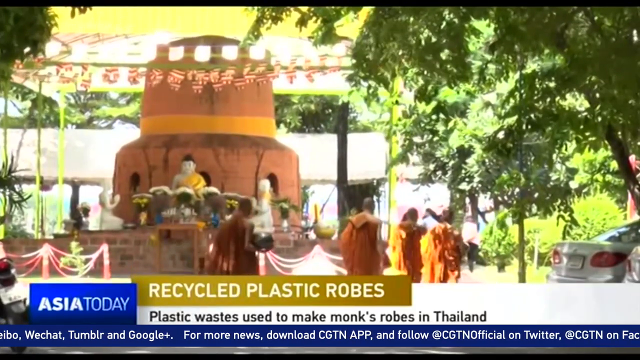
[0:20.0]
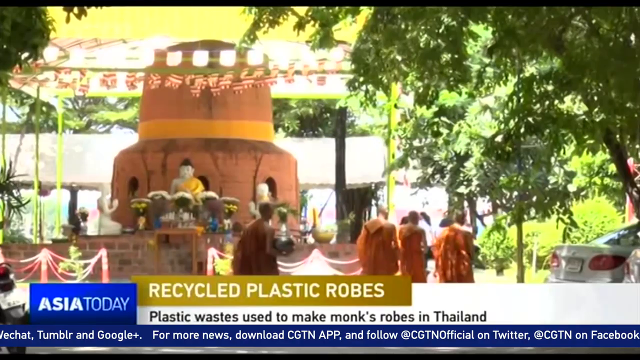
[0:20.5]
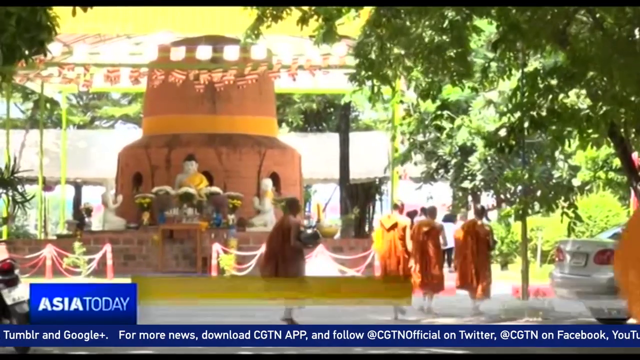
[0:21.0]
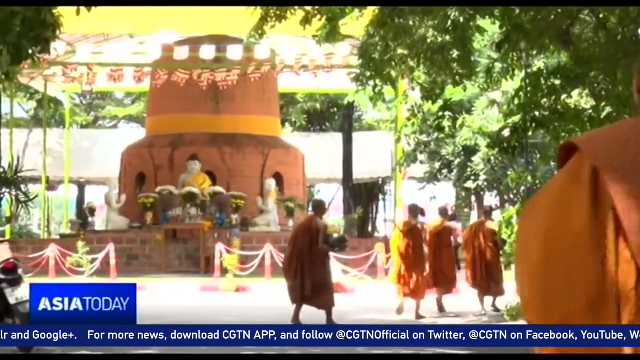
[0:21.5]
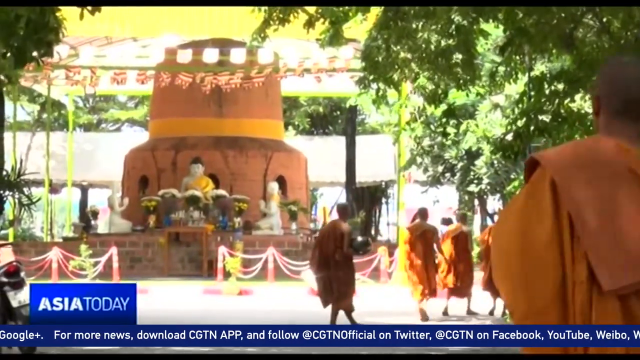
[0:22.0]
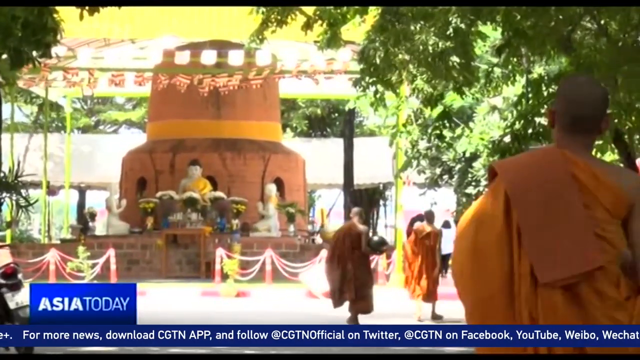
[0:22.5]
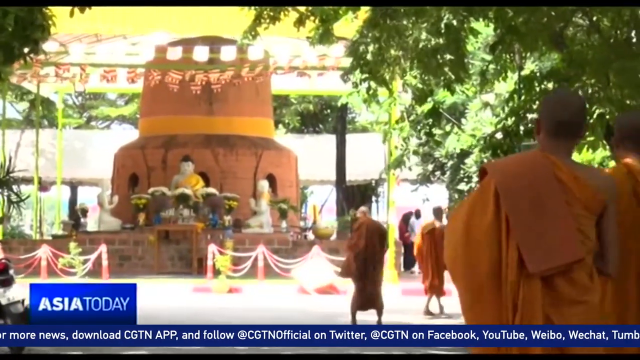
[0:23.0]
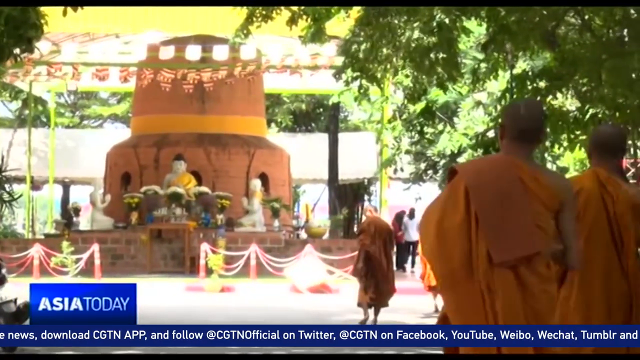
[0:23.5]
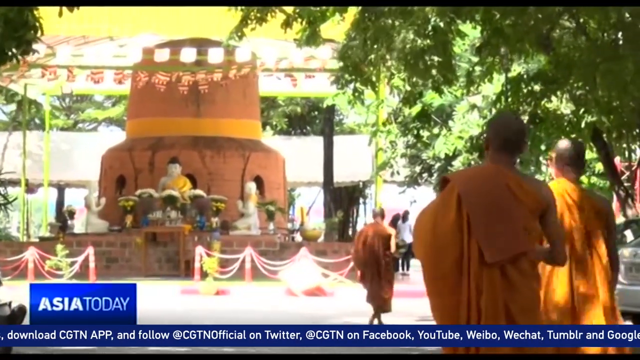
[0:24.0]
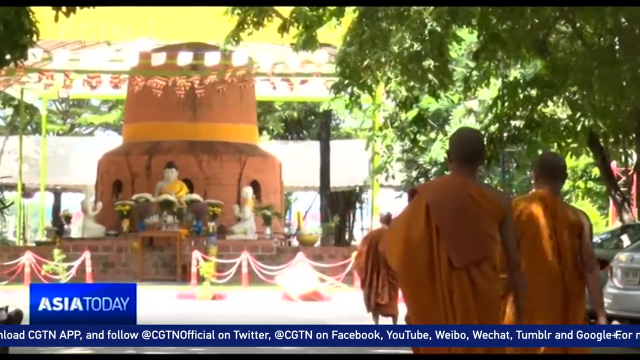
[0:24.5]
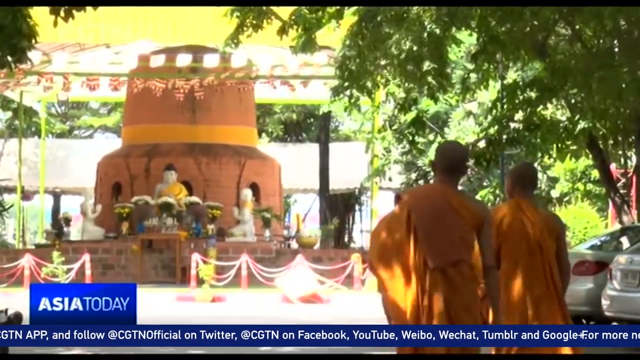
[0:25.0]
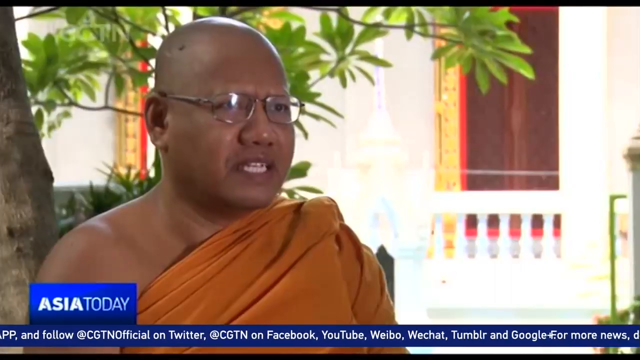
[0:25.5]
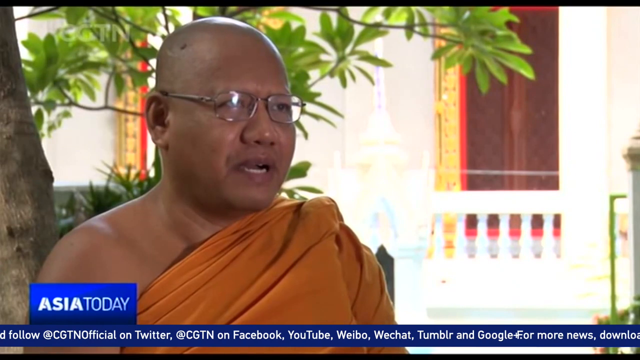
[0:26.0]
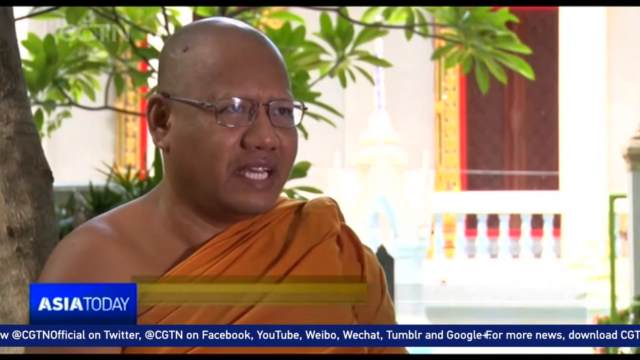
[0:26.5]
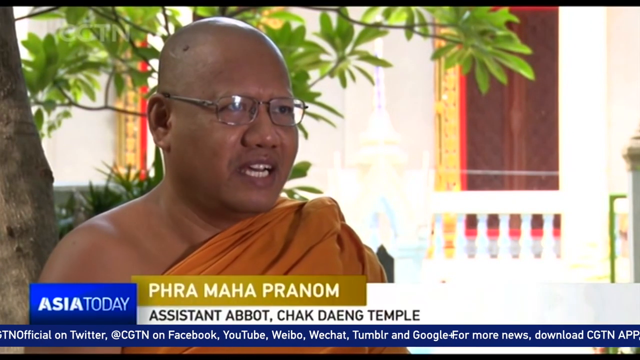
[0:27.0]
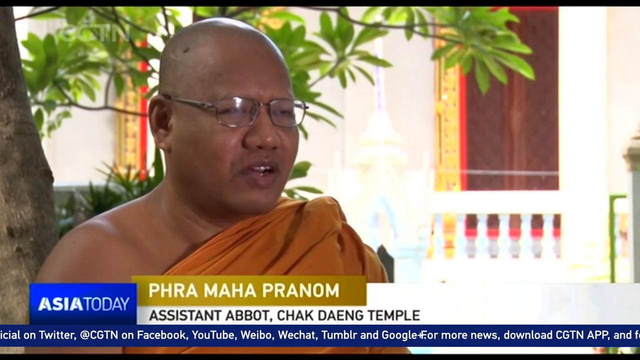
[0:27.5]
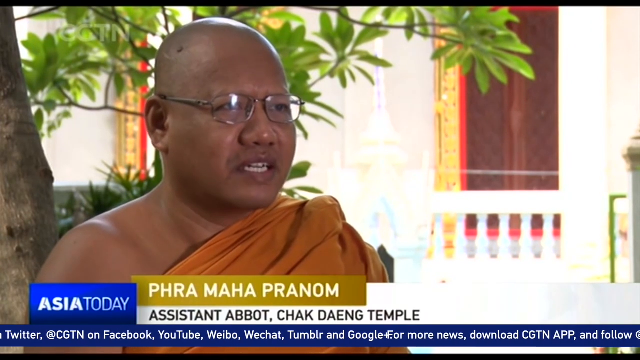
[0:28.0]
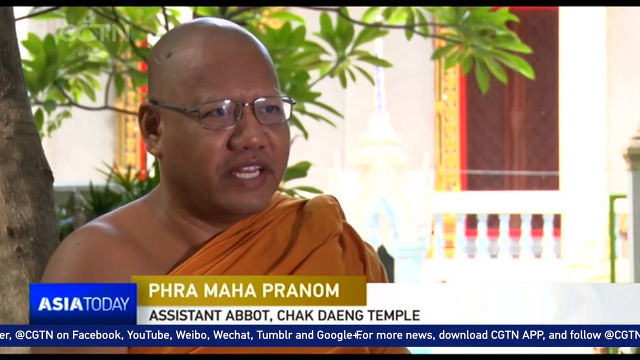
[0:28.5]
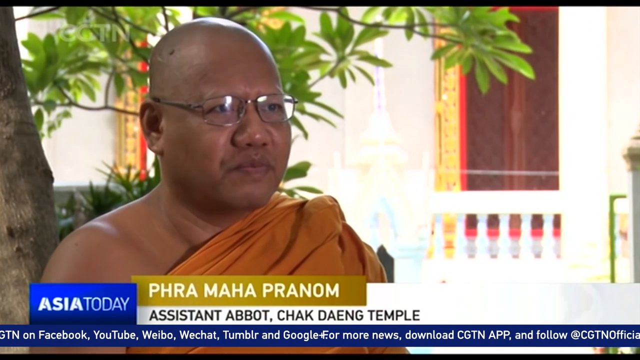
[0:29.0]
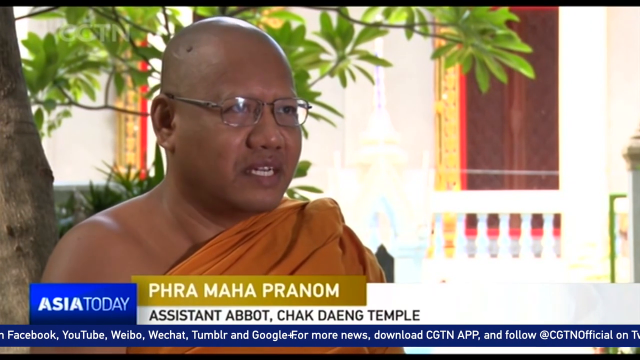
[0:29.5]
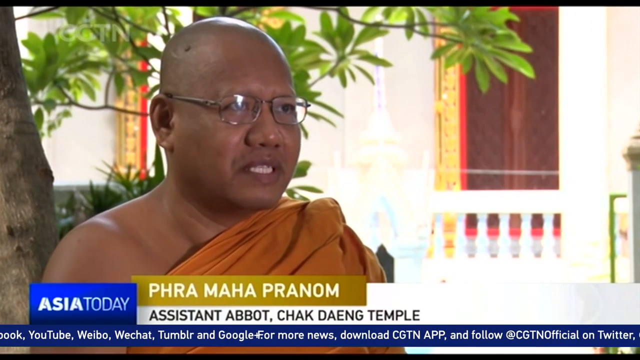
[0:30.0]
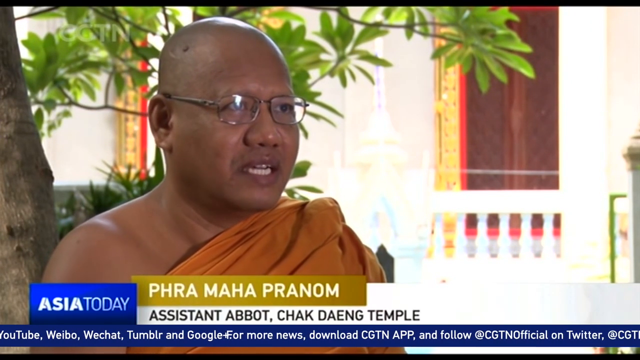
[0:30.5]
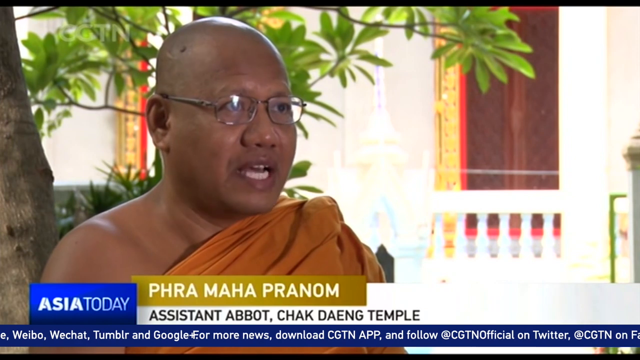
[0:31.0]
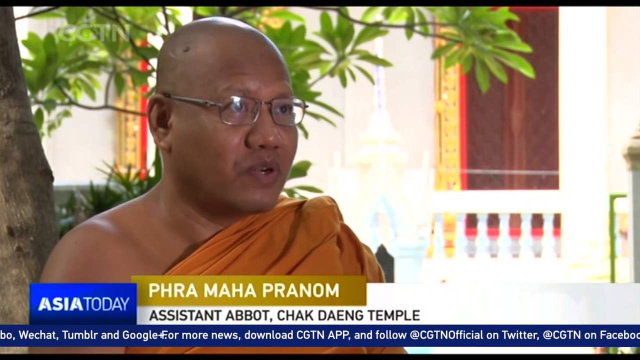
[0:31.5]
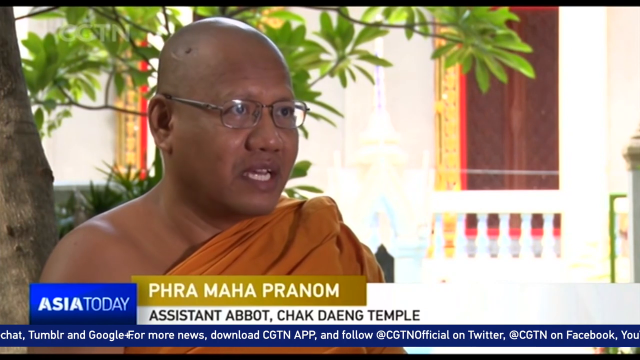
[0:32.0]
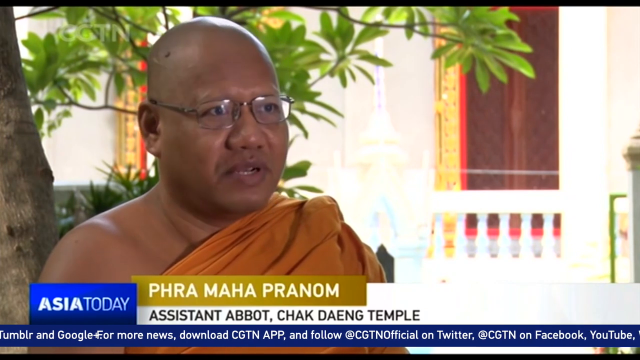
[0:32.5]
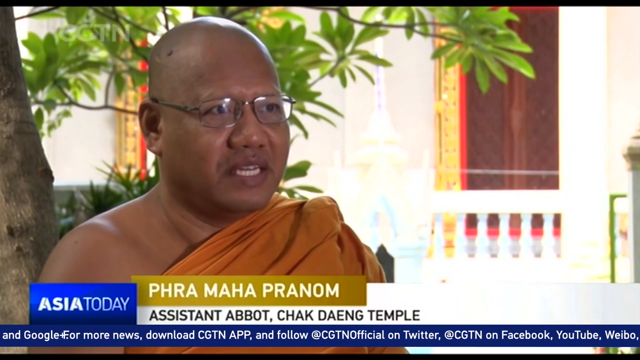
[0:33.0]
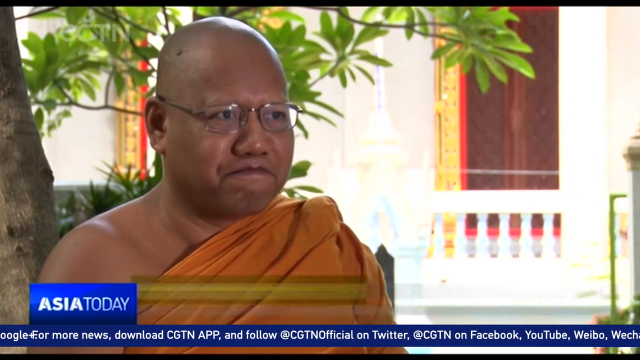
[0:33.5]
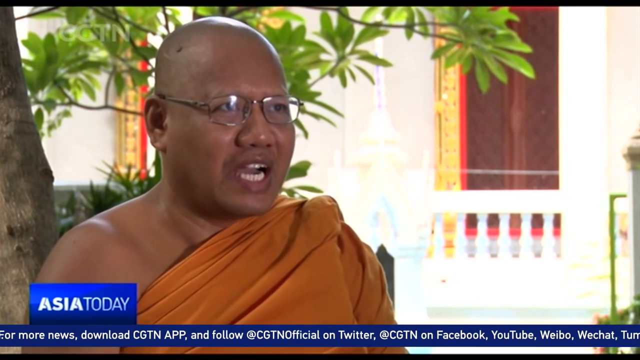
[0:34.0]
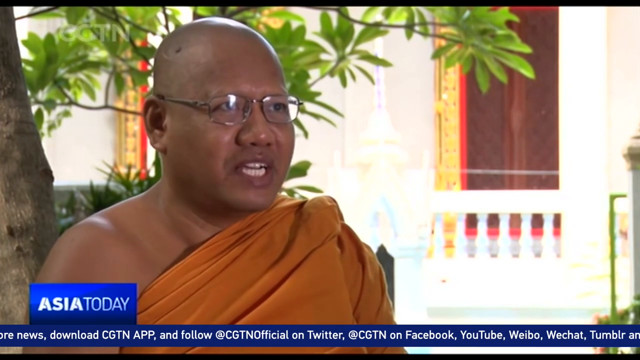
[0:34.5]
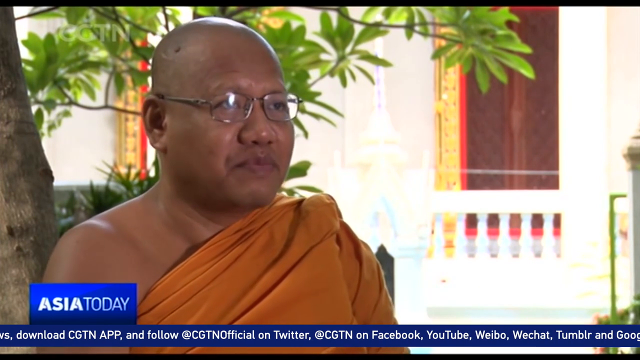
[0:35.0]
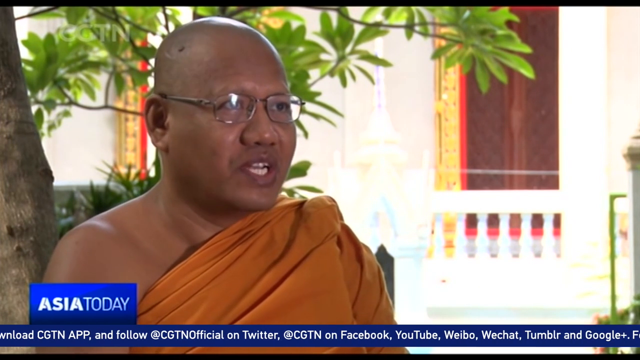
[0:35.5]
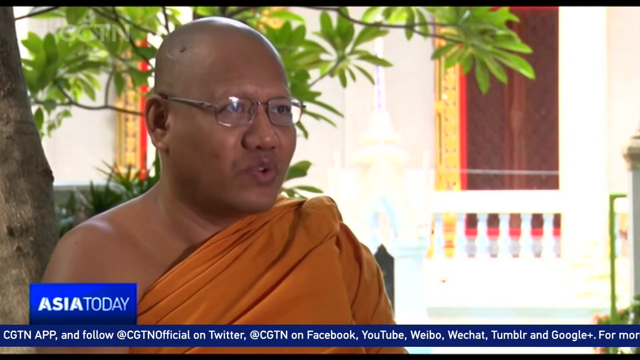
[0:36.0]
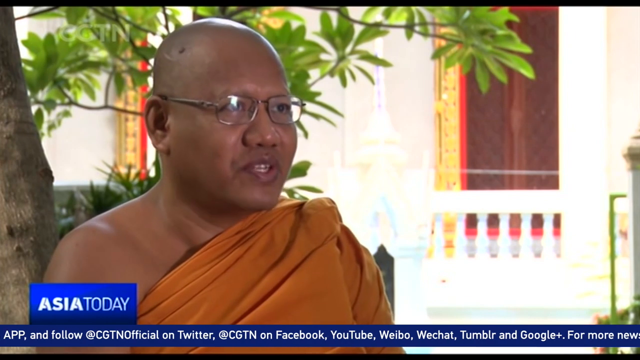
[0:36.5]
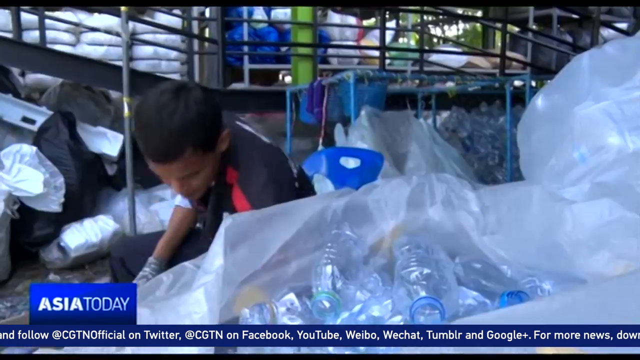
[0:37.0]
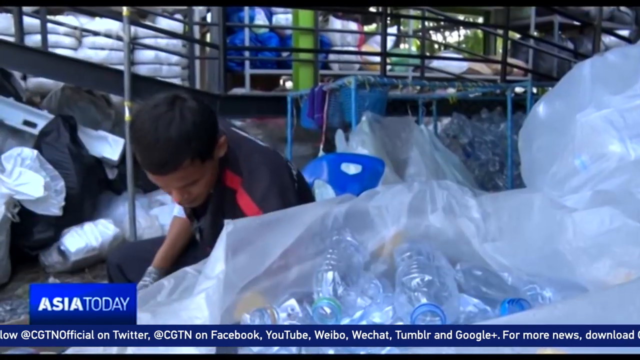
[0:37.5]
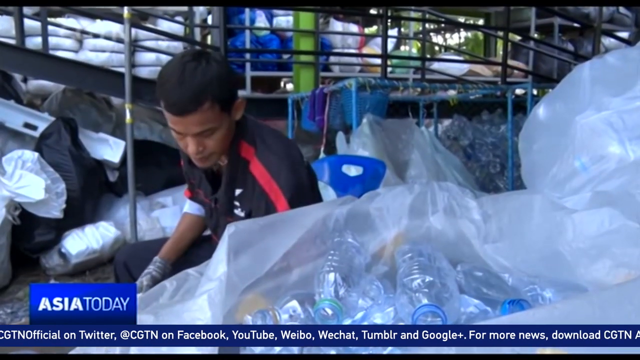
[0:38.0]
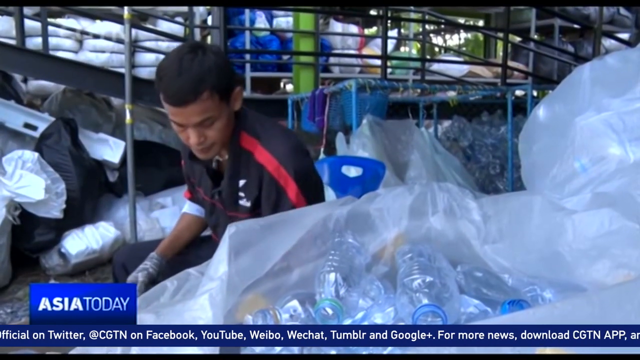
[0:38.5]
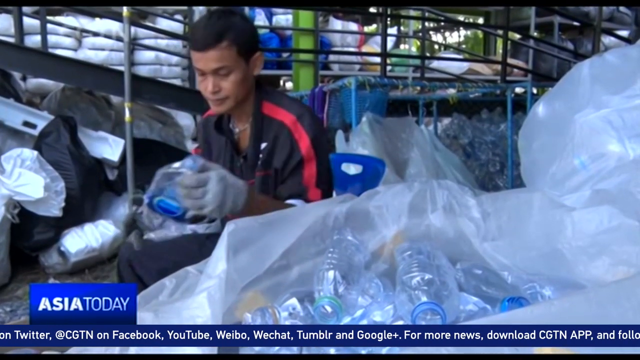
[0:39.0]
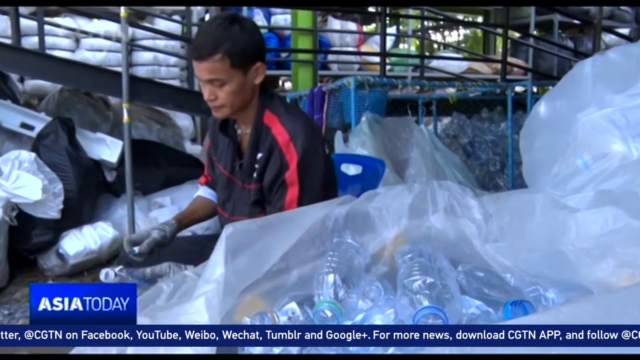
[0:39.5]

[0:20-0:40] Men walk towards a temple, and one of them holds a big silver pot. They walk towards the back, where there is a temple building that looks like a church, with statues visible. A man wearing glasses and an orange robe speaks, his eyes slightly off the camera. Beside him are a building and a brown door with red and gold around it. He is seated on the left side of the screen, and behind him there is a tree; the building in the back has white walls. The scene moves to a room where recycled plastic containers are being put into plastic. Men are helping there, and one of them wears a black uniform with red lines.